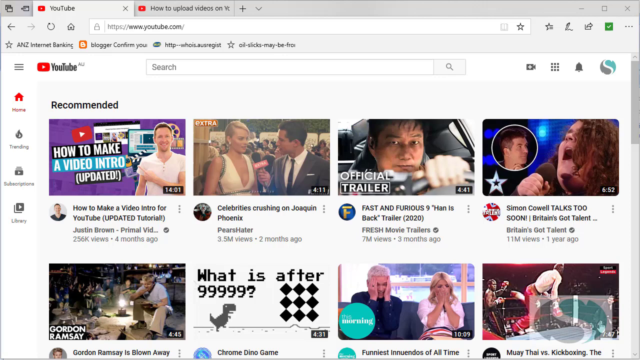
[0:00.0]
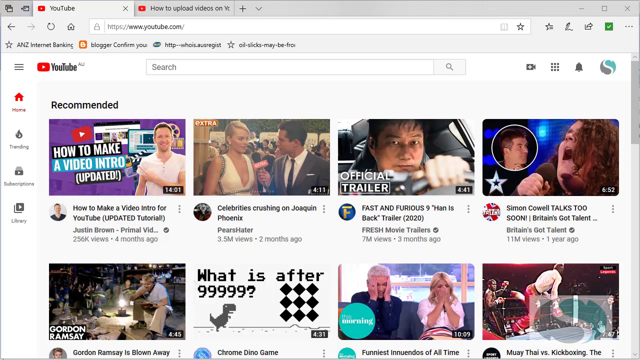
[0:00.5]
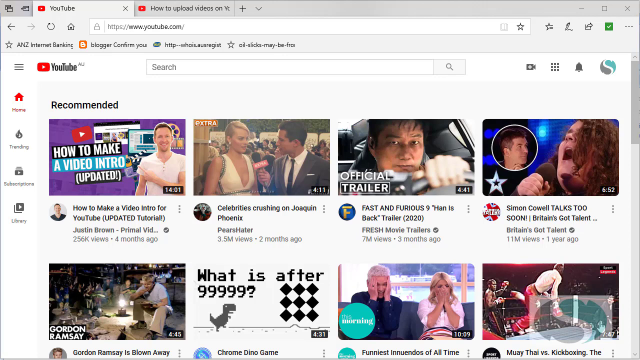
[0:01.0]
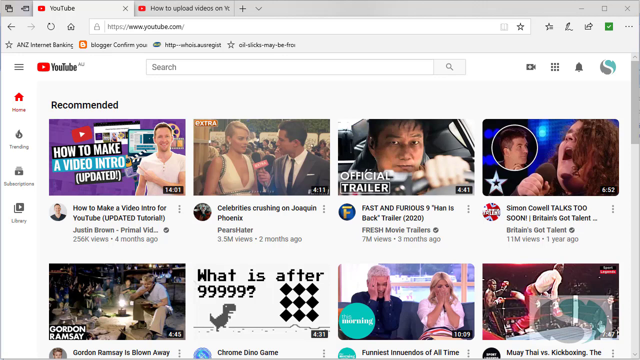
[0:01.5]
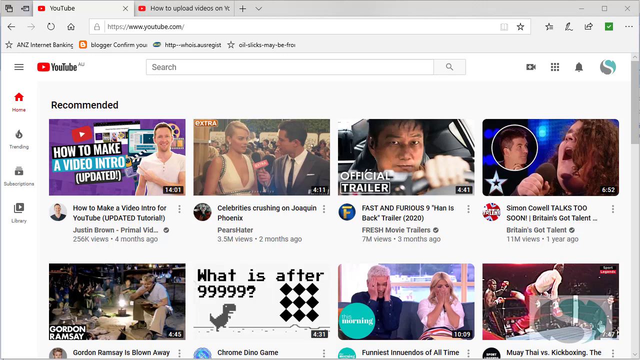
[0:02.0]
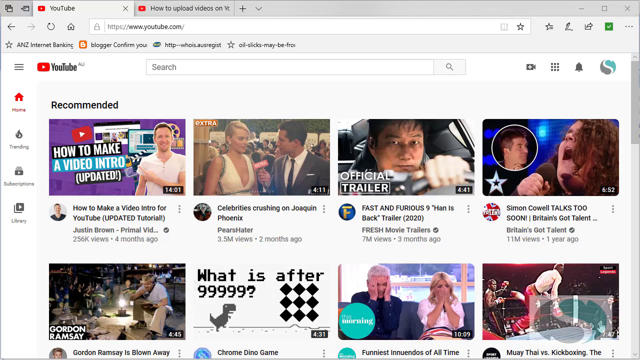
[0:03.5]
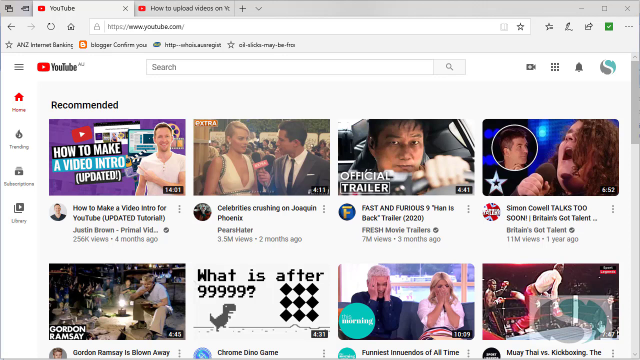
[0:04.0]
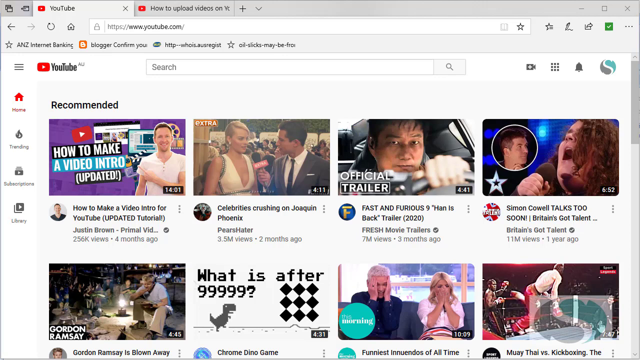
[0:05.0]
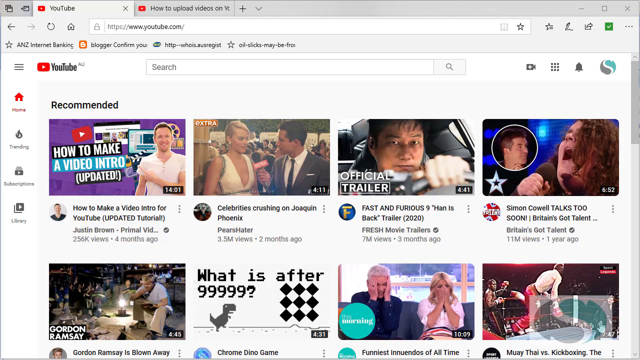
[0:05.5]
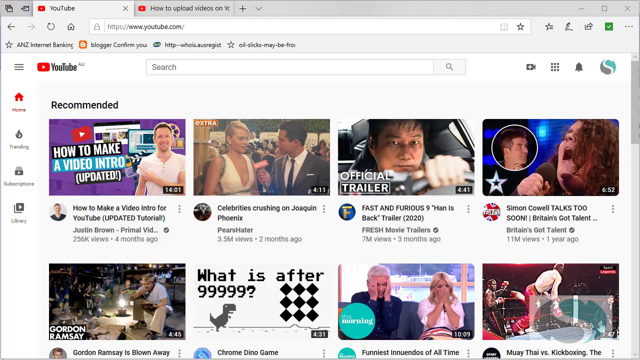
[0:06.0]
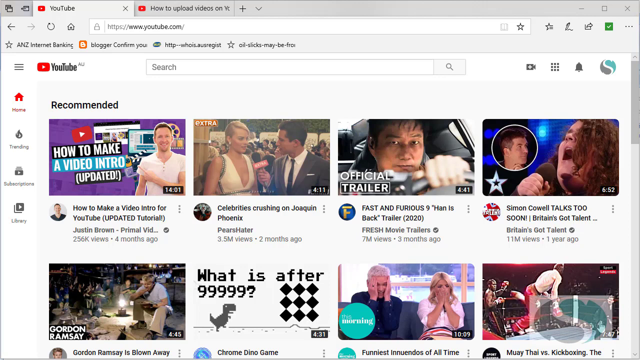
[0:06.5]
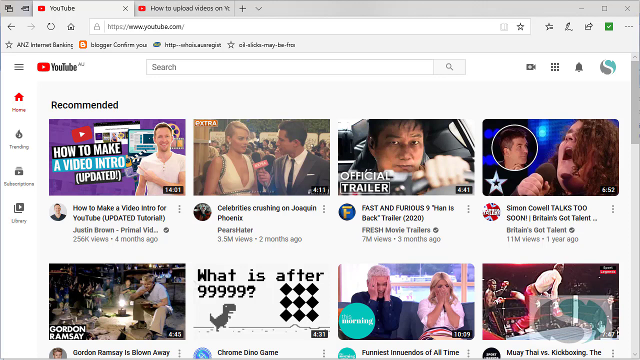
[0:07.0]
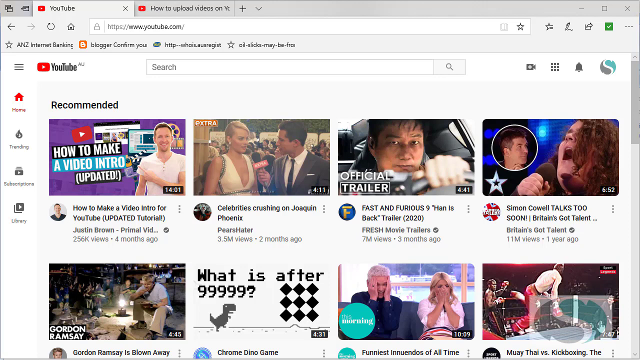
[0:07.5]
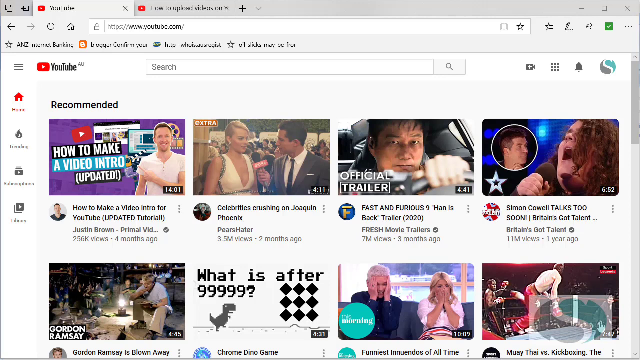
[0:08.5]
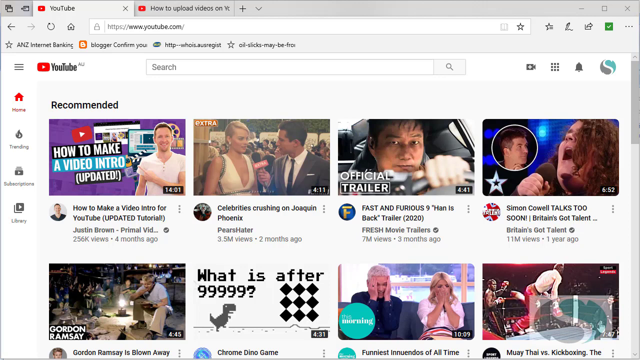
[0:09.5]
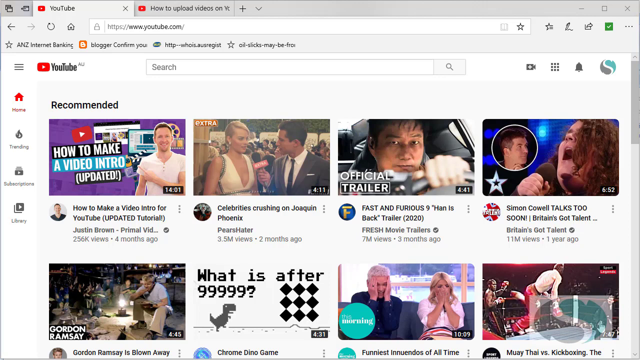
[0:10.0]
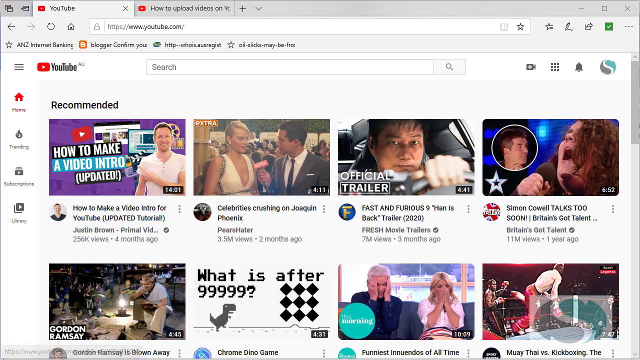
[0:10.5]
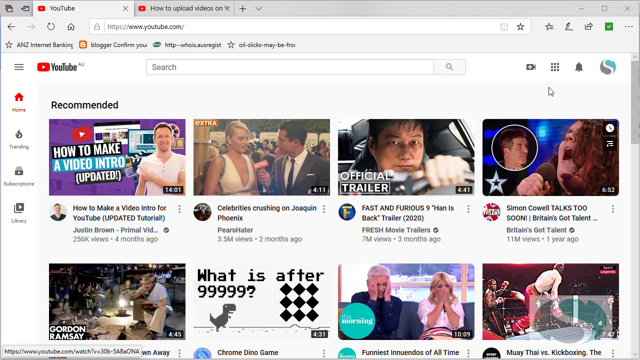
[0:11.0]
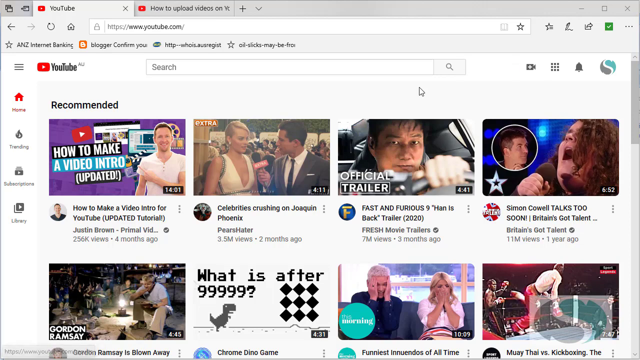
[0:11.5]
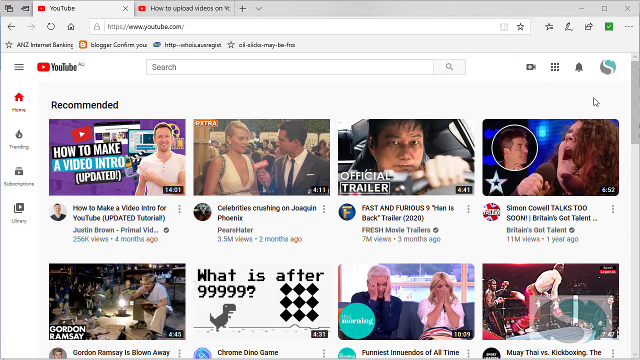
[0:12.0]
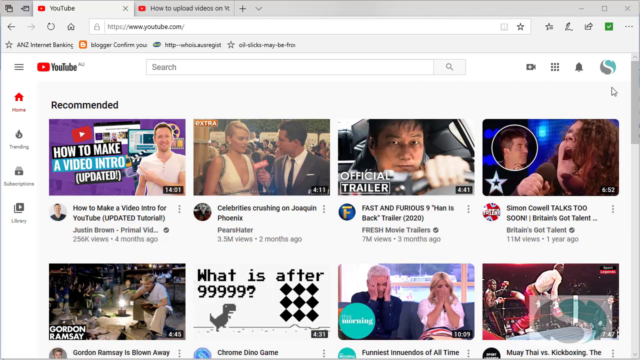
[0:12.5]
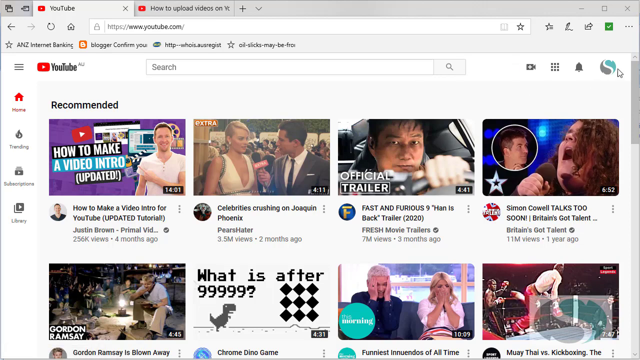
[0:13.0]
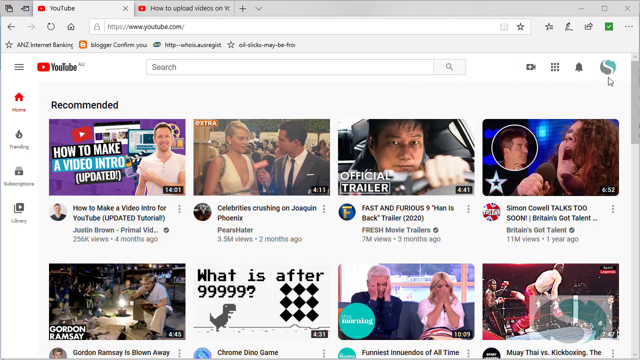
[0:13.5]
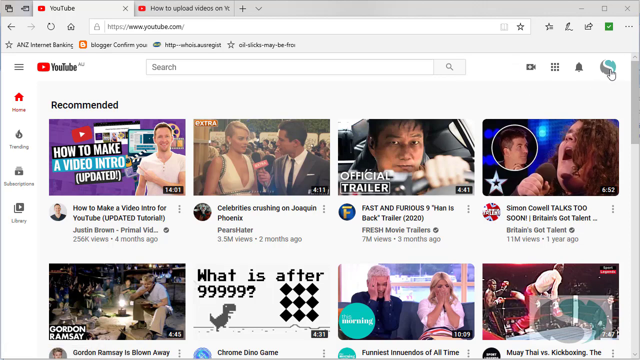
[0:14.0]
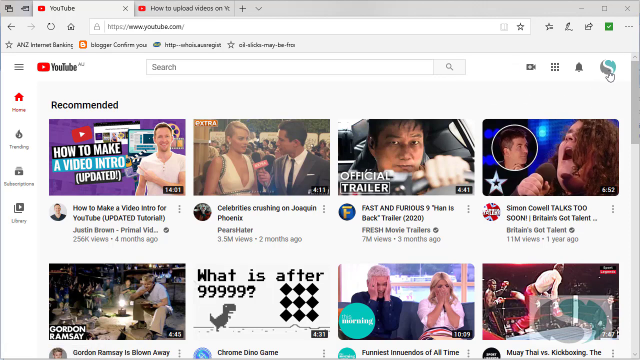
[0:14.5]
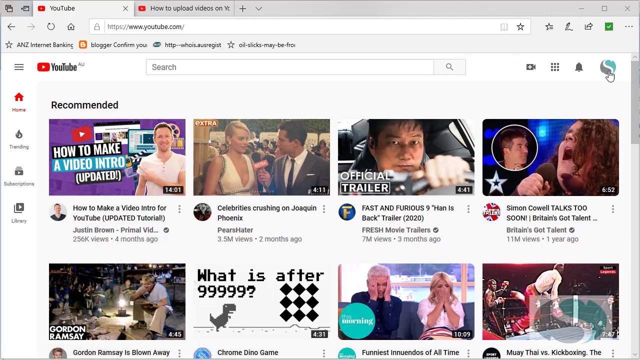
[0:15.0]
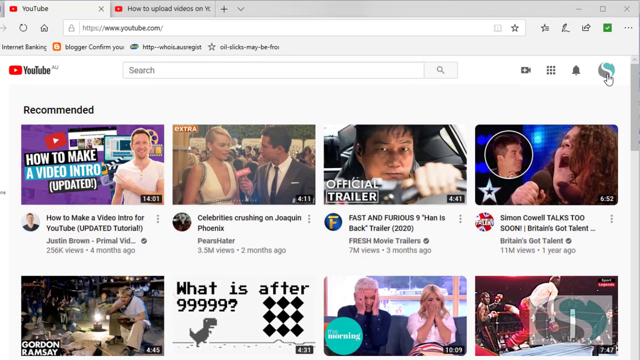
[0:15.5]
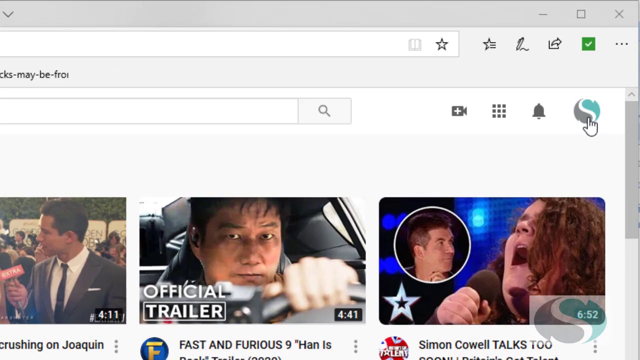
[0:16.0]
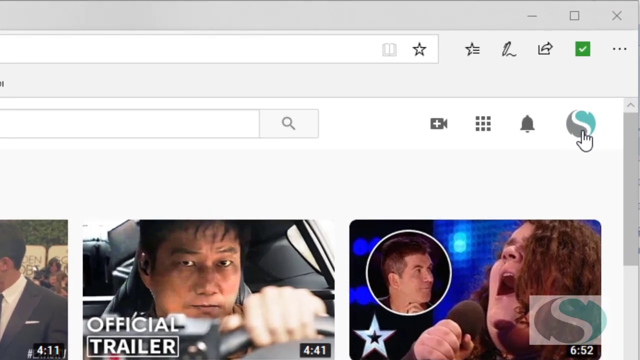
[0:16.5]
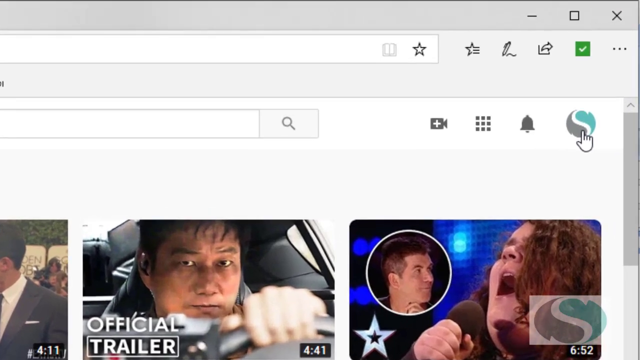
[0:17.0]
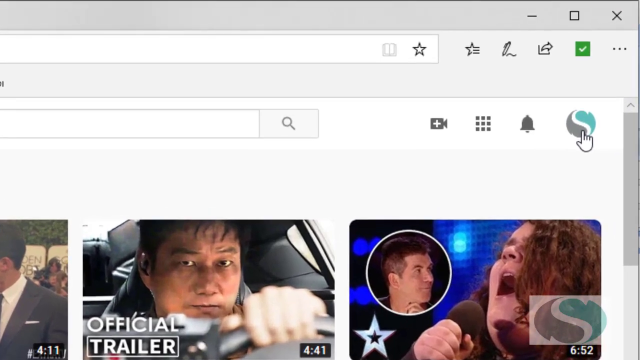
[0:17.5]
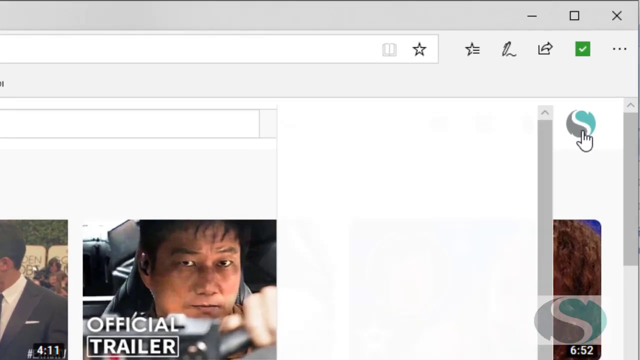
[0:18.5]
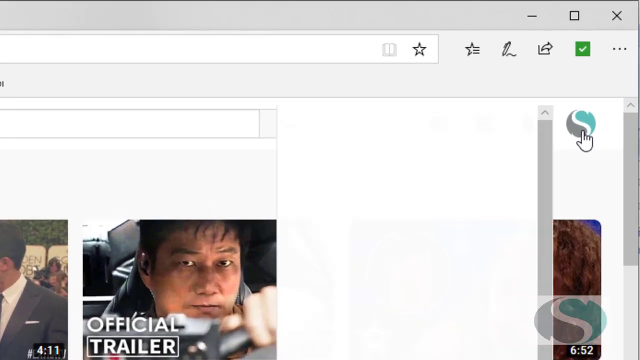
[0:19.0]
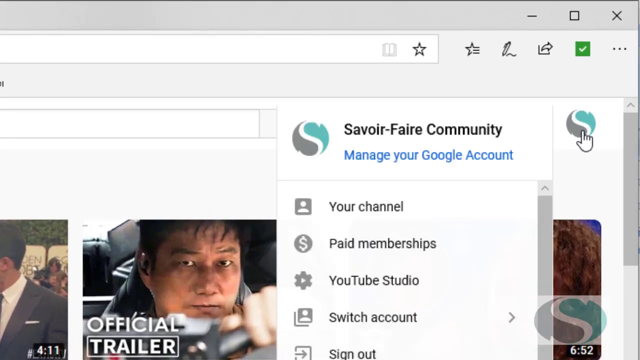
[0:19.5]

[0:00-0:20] The video opens on what seems to be someone's YouTube home page, displayed in the light view rather than the dark one. A row of what seem to be recommended videos is visible, including "how to make a video intro for YouTube," "Celebrities crushing on Joaquin Phoenix," a "Fast and Furious 9" trailer, and "Simon Cowell talks too soon." A second row shows more recommended videos, one of which features Gordon Ramsey. The user seems interested in their profile picture and clicks on it, bringing up a drop-down menu that reads "manage your Google account" and shows the account name, SAVOIR fair community. The drop-down lists "your channel," "paid memberships," "YouTube studio," and "switching account."